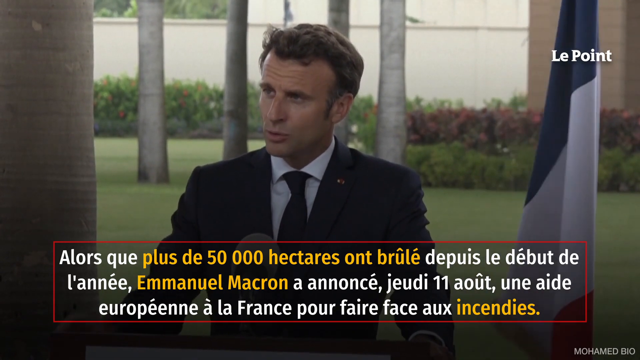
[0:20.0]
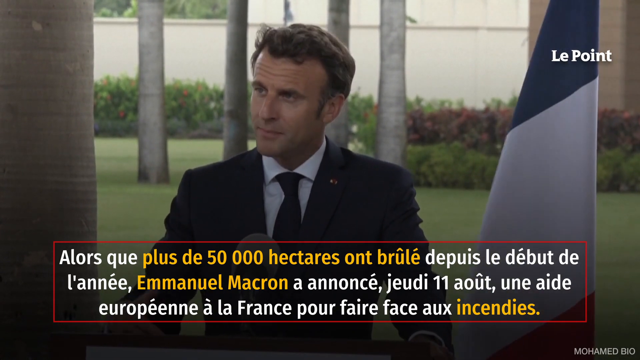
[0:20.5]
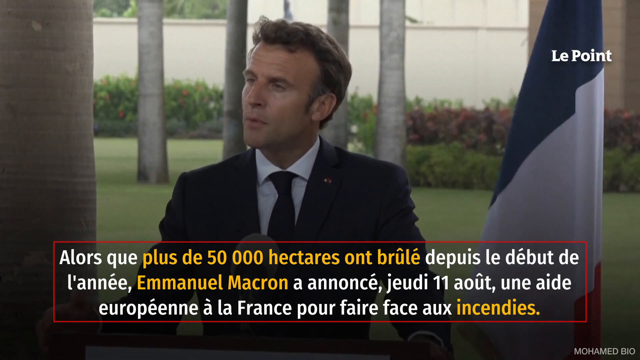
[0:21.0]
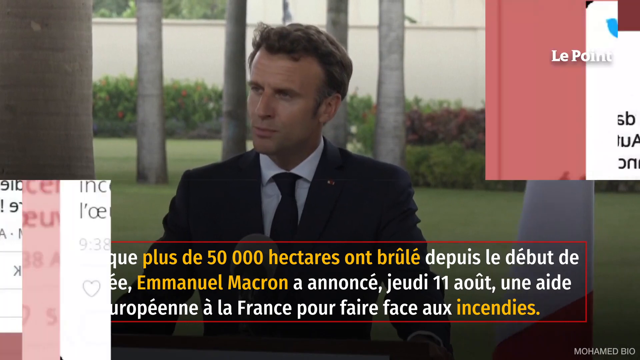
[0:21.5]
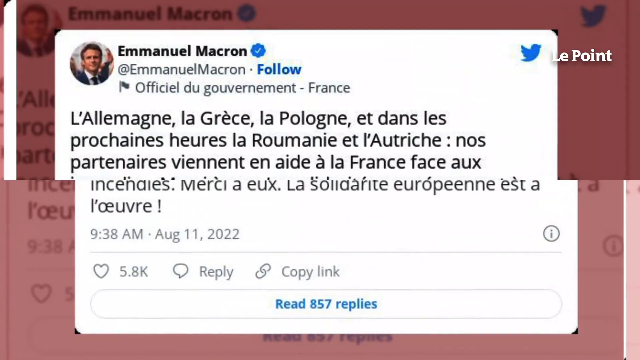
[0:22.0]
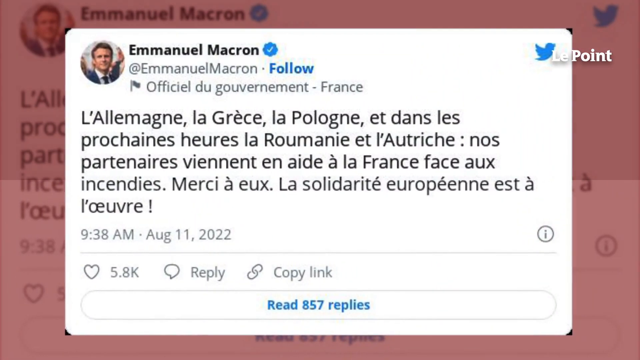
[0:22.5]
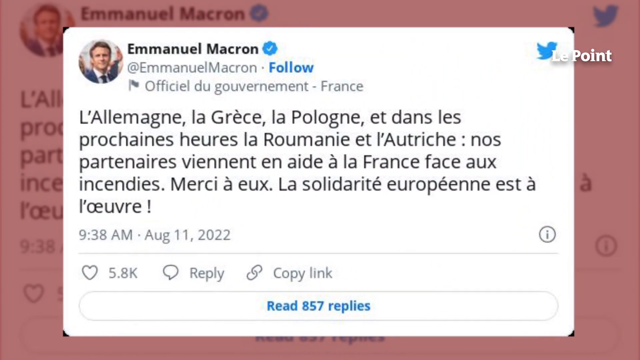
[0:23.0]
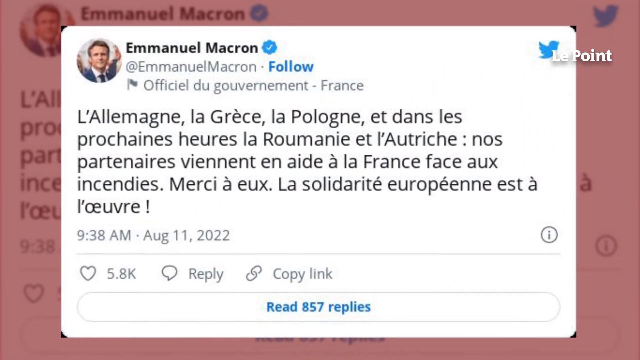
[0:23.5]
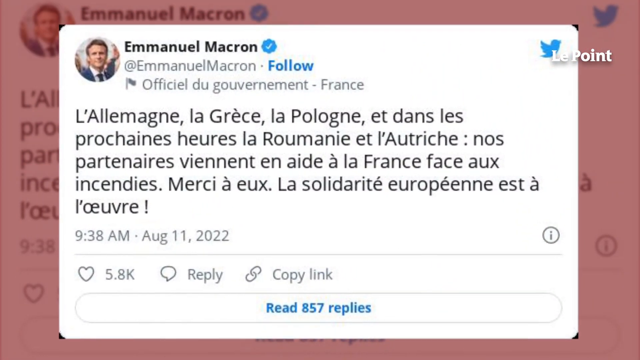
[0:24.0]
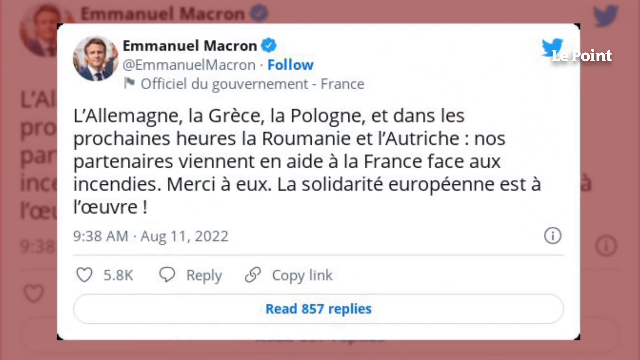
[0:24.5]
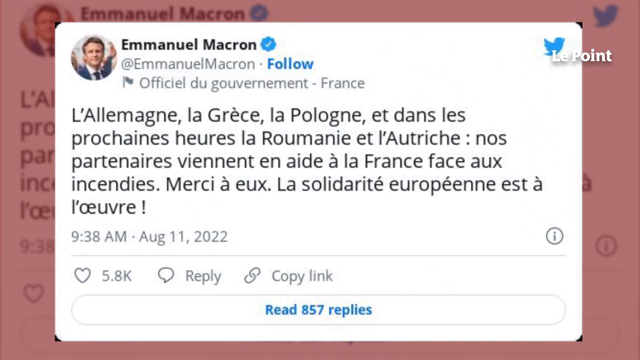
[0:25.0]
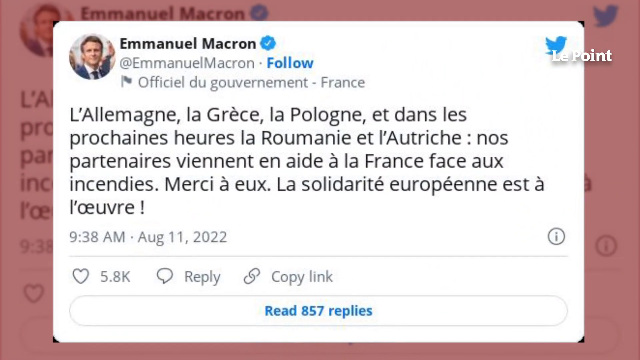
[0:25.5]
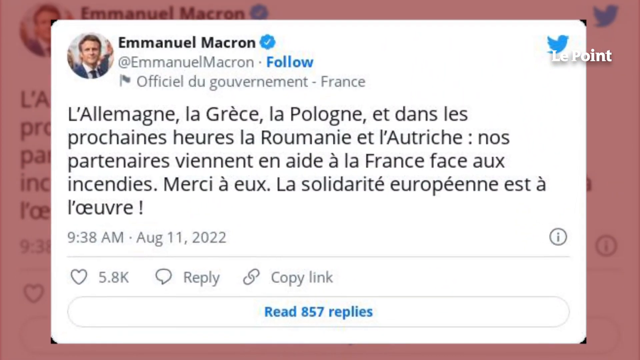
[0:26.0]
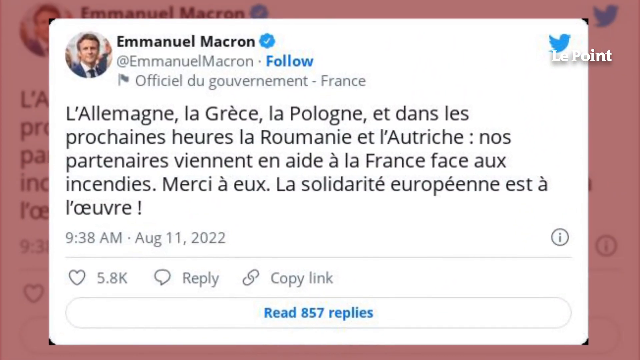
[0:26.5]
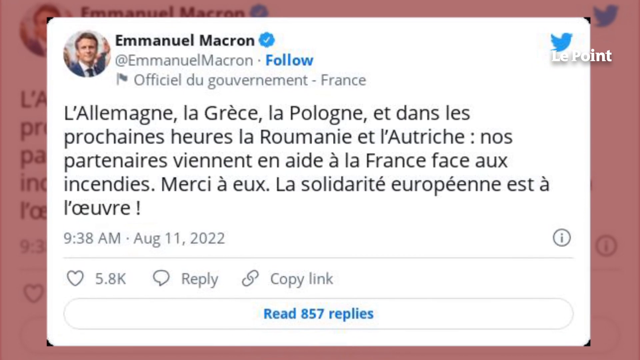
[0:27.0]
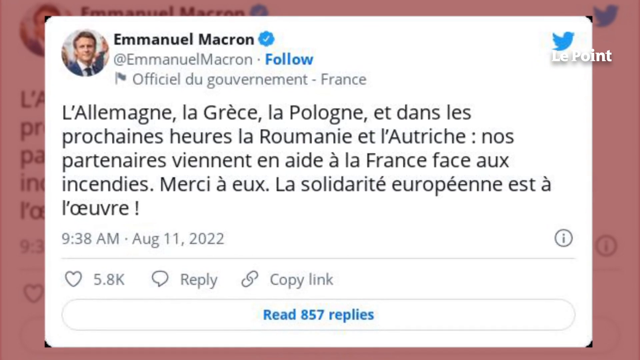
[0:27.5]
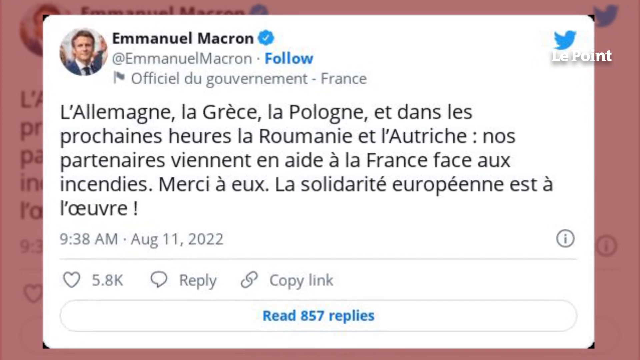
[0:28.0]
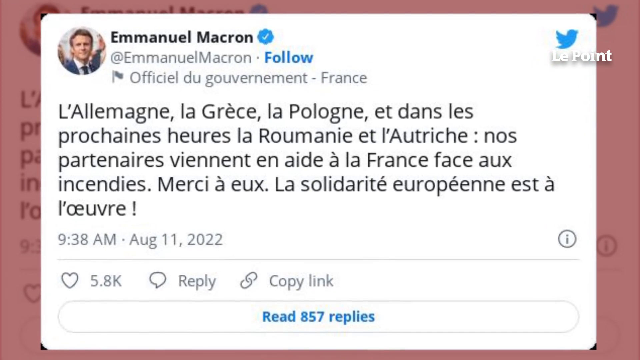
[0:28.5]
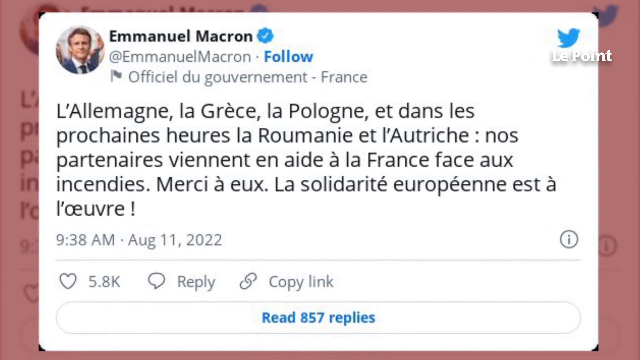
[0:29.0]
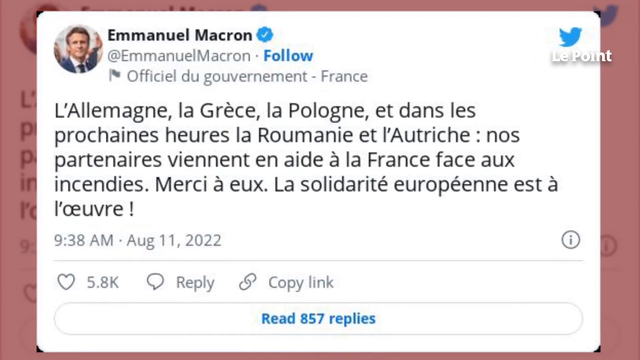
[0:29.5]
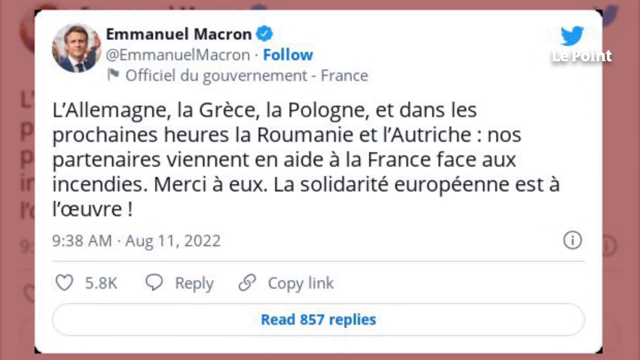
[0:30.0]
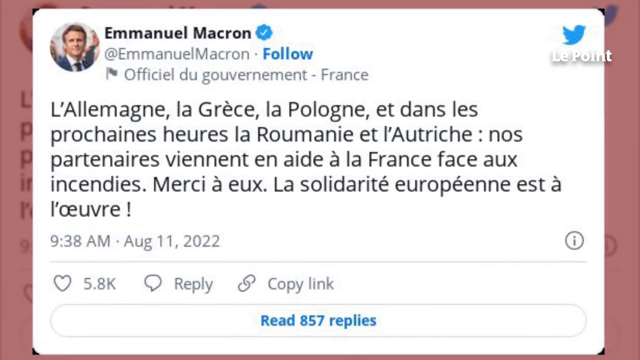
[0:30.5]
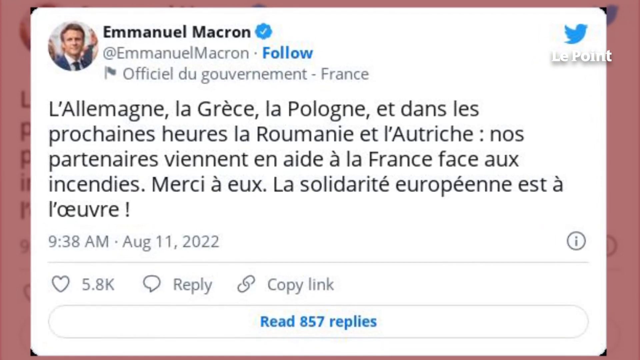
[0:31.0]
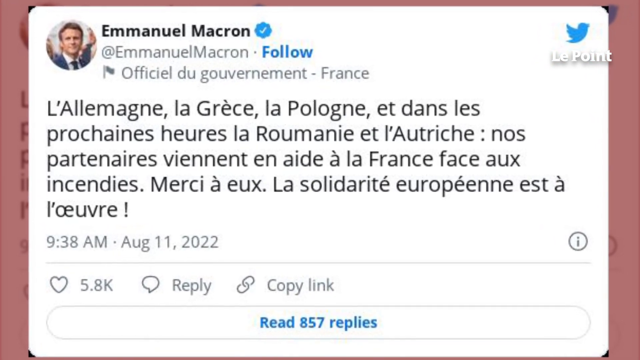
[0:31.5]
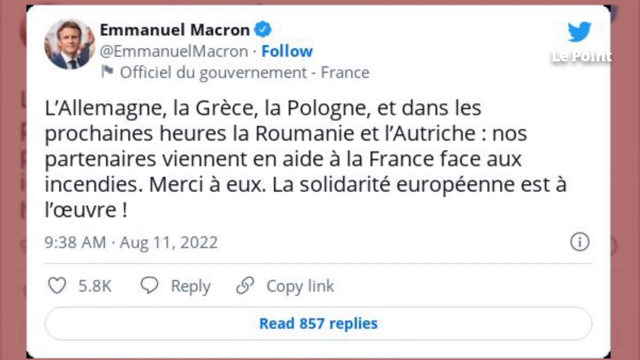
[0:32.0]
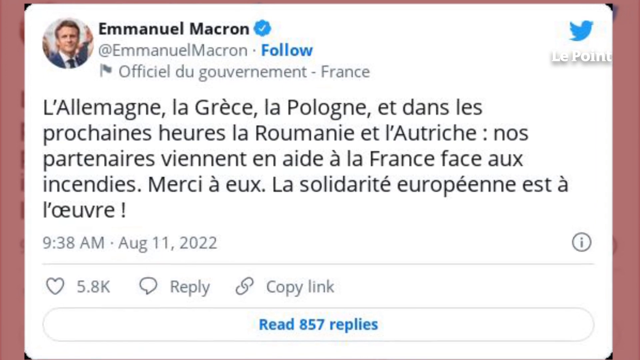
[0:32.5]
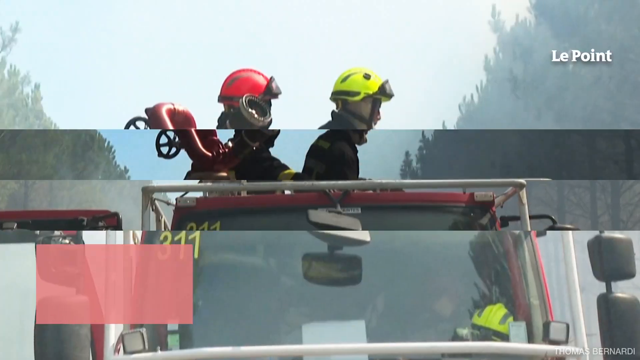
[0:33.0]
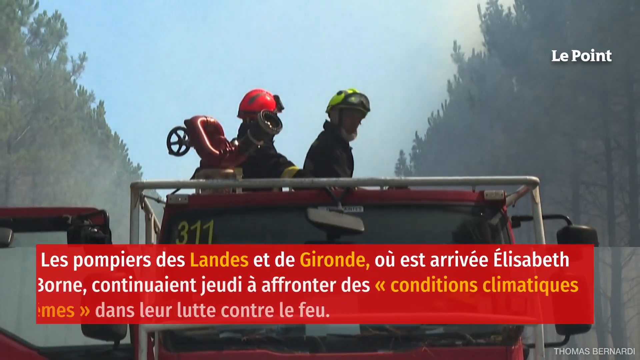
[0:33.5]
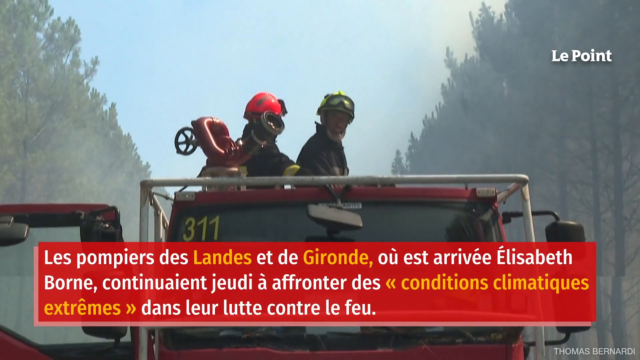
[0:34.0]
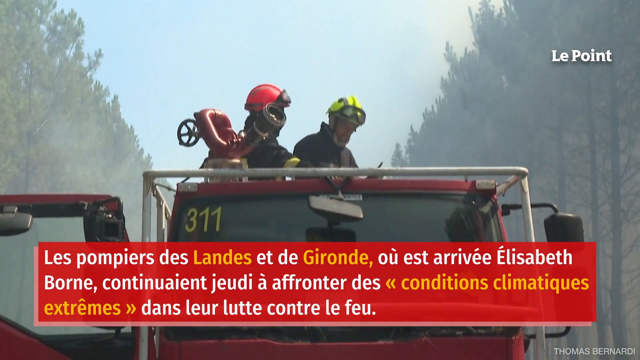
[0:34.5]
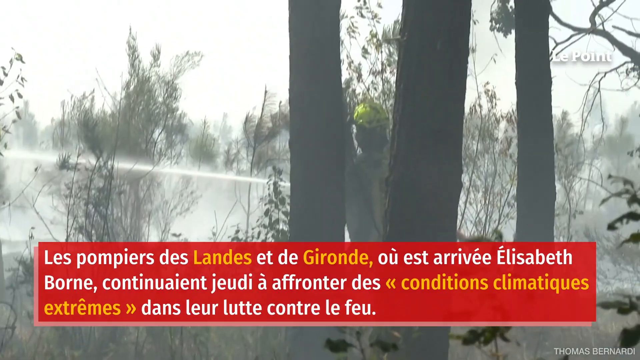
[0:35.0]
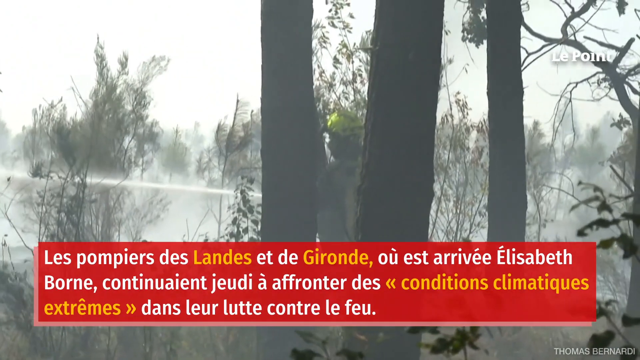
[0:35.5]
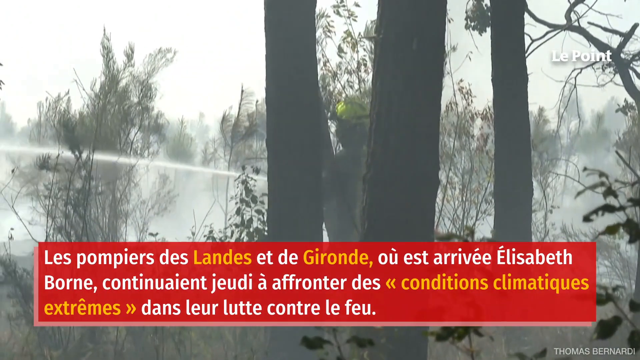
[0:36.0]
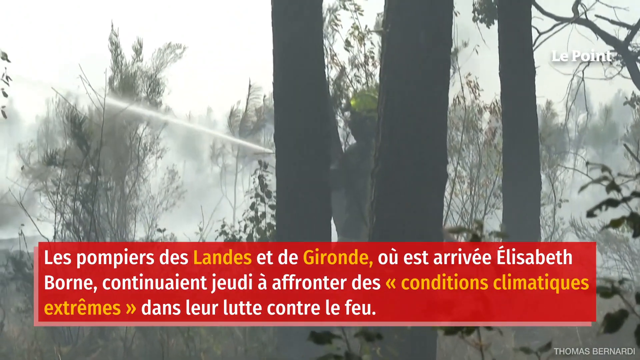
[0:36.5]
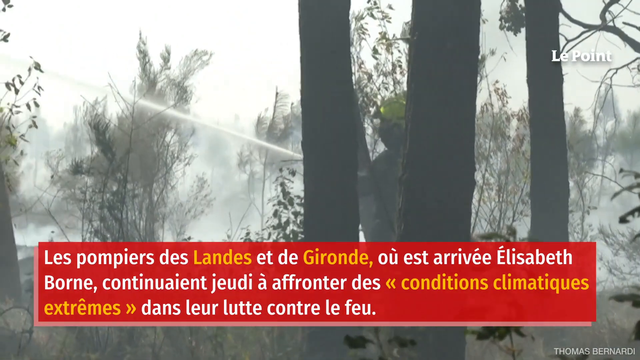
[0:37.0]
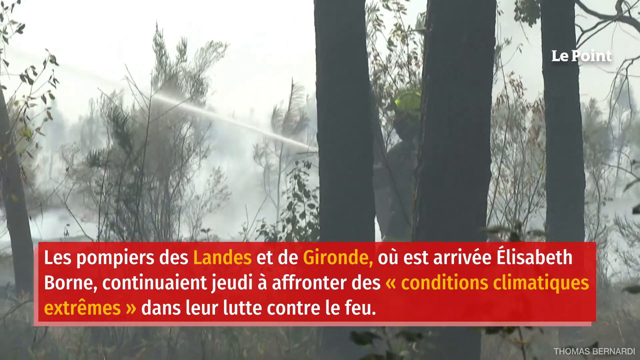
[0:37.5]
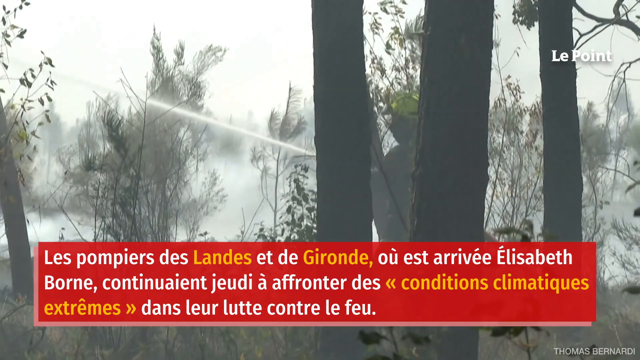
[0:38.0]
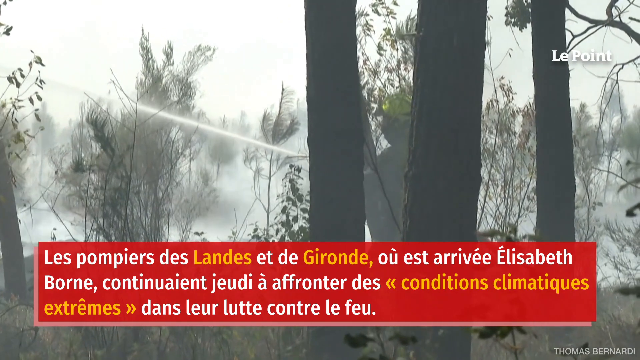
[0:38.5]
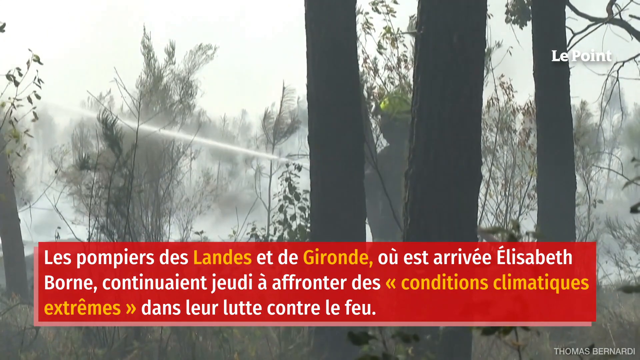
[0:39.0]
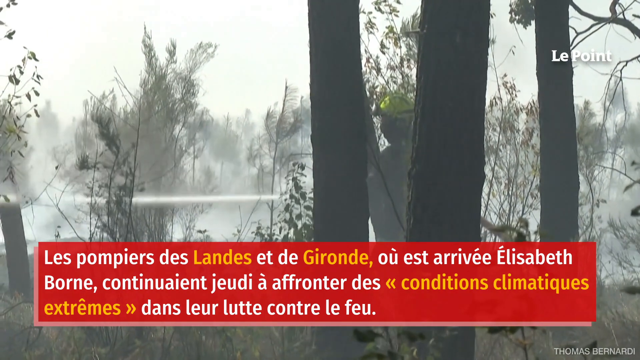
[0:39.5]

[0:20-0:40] The coverage continues on the middle-aged, well-groomed white man with sandy blonde and gray hair, wearing a suit in an outdoor park area, as he provides a news update to reporters. Only the man can be seen. Text at the bottom is in French, and the number "50,000" and the name "Emmanuel Macron" appear in it. The coverage then cuts to a photo of a tweet from Emmanuel Macron, who has an official French government title. The tweet is in French, was posted on August 11th, 2002, at 9:38 AM, and has 857 replies. Next comes video of firefighters apparently putting out a wildfire: two fully suited firefighters ride in a fire truck, followed by a firefighter with water attempting to extinguish an outdoor wildfire with a hose.